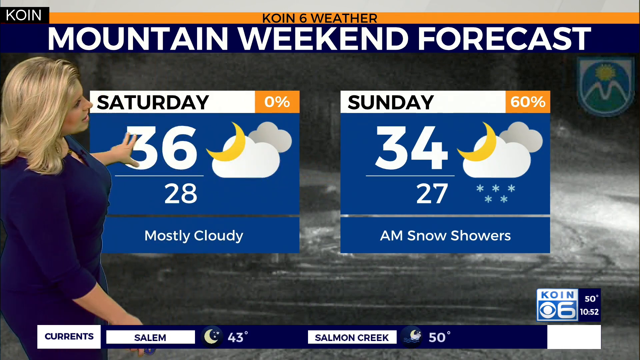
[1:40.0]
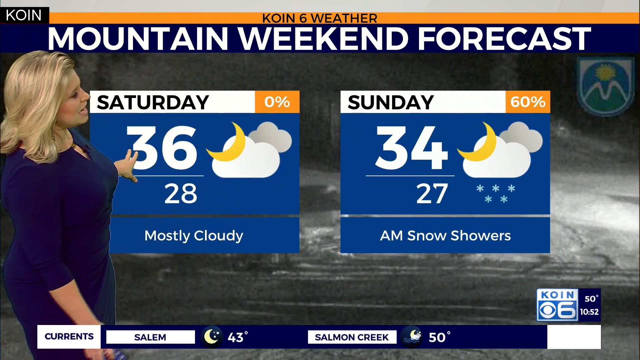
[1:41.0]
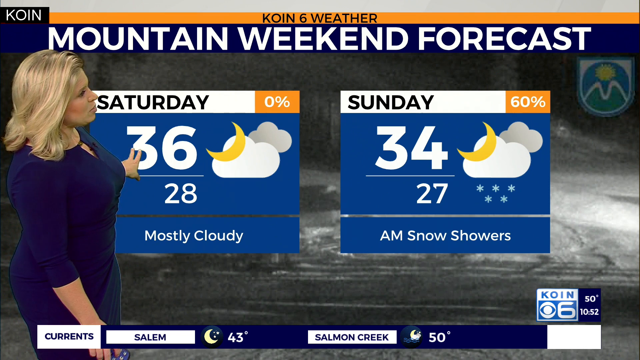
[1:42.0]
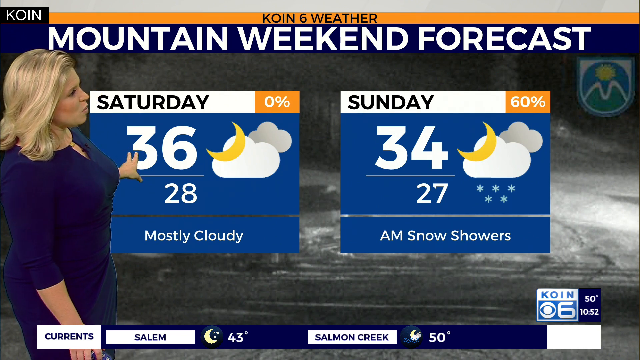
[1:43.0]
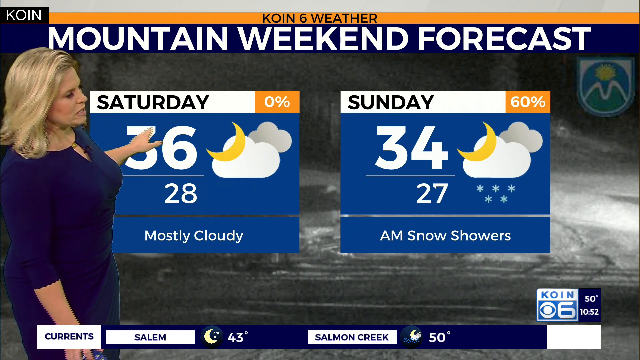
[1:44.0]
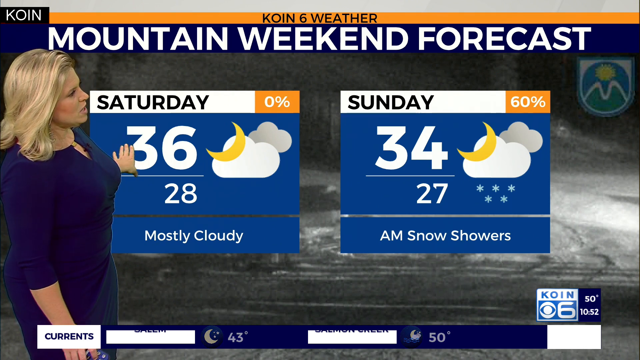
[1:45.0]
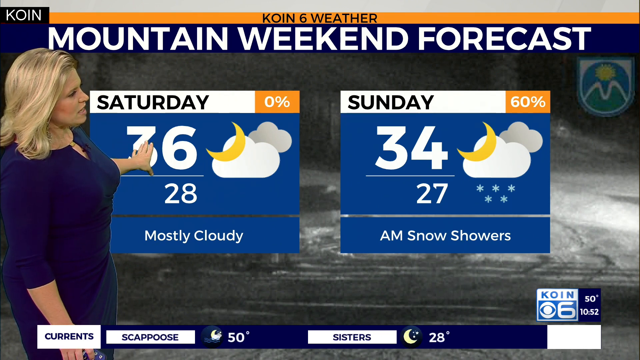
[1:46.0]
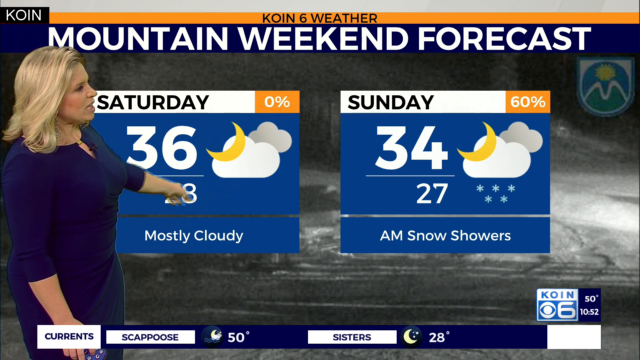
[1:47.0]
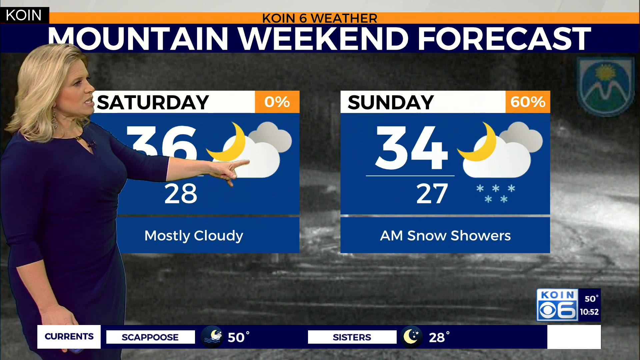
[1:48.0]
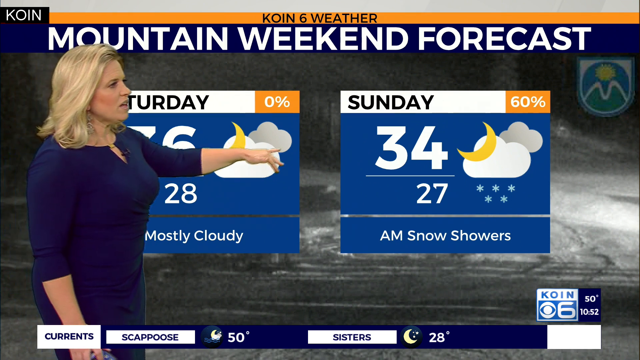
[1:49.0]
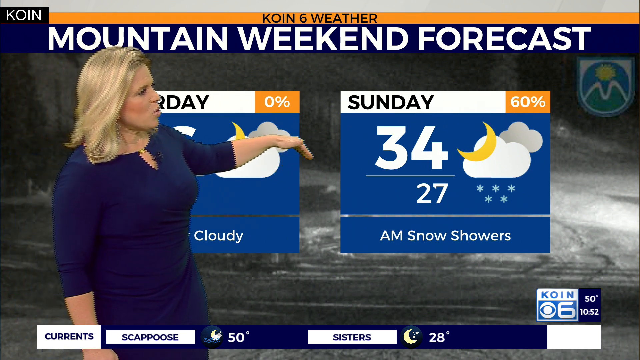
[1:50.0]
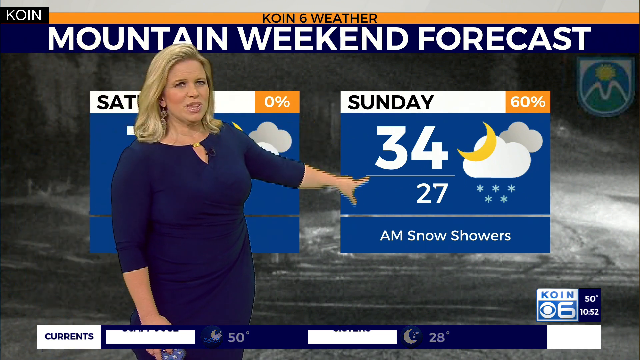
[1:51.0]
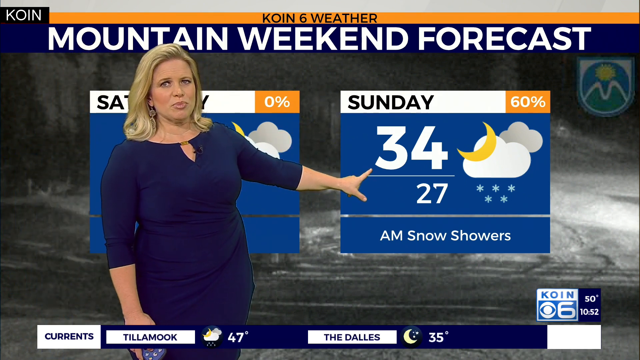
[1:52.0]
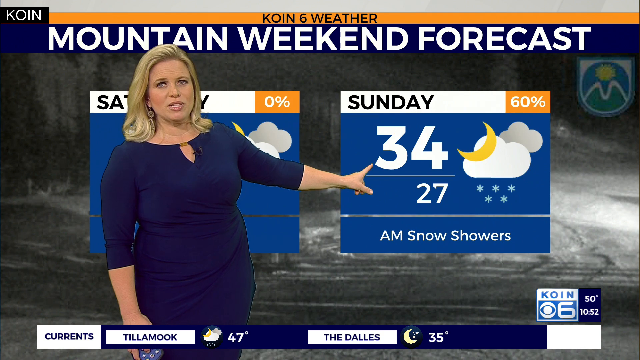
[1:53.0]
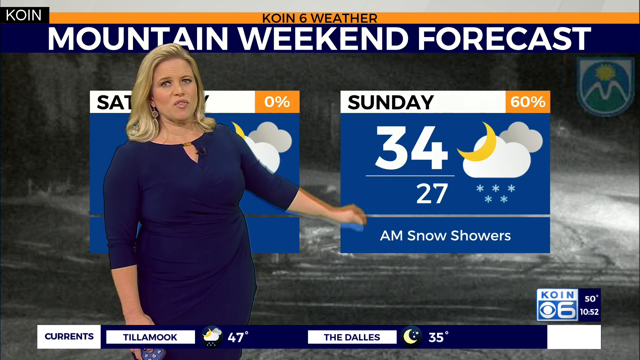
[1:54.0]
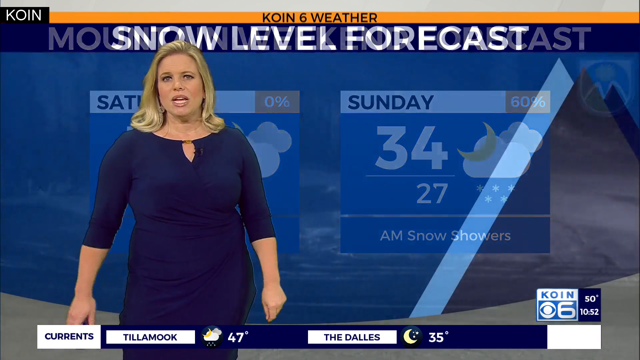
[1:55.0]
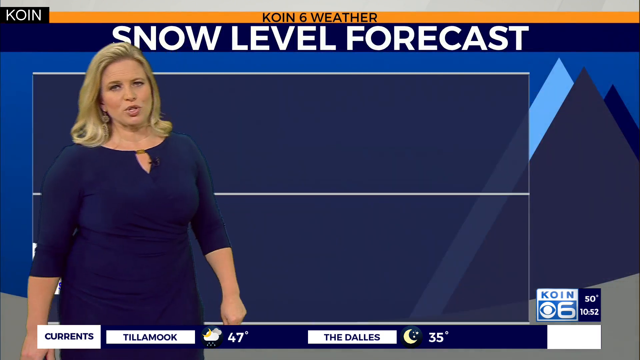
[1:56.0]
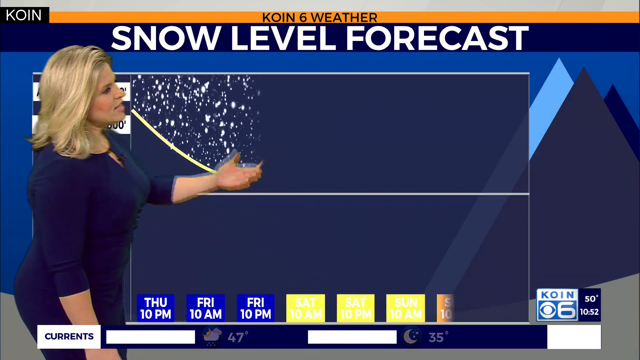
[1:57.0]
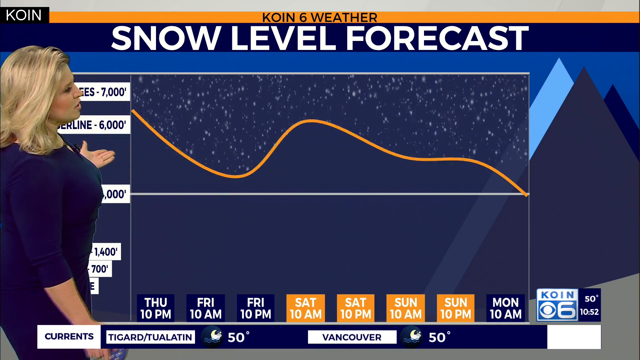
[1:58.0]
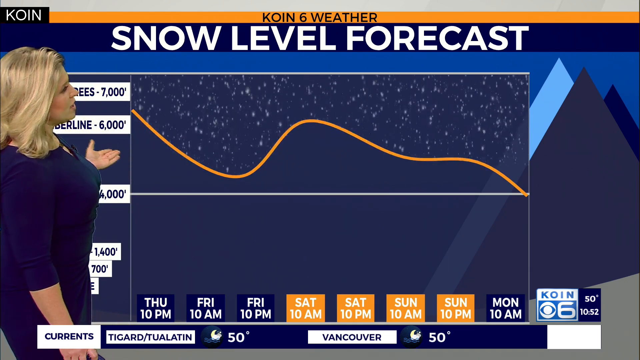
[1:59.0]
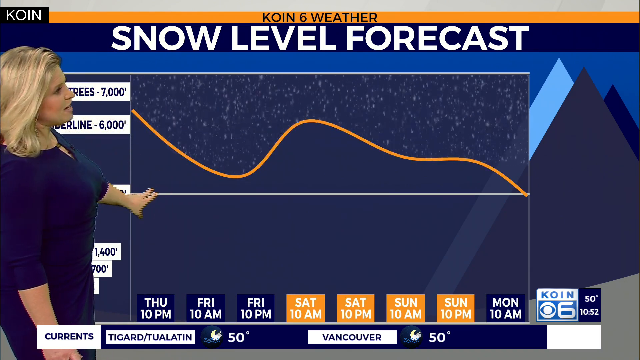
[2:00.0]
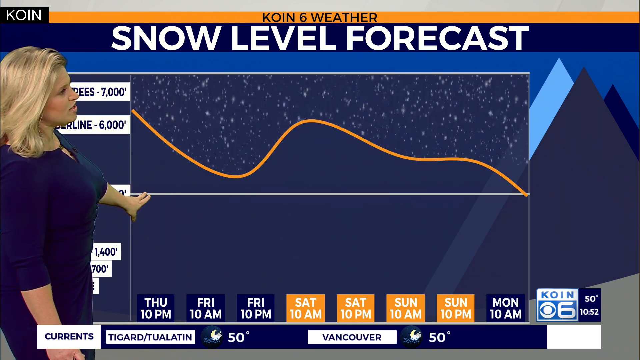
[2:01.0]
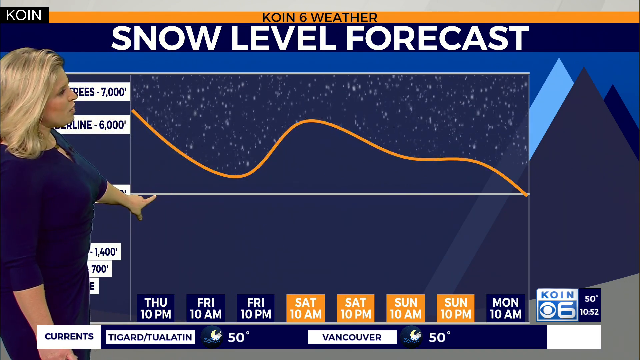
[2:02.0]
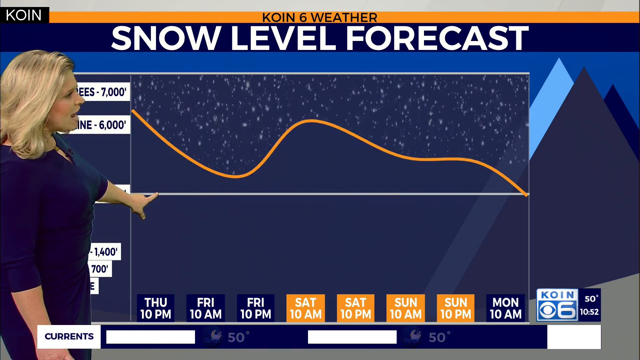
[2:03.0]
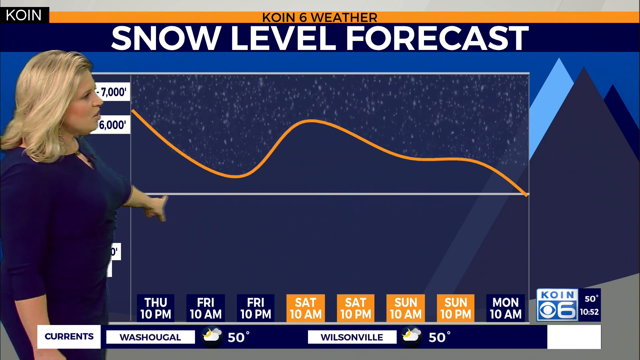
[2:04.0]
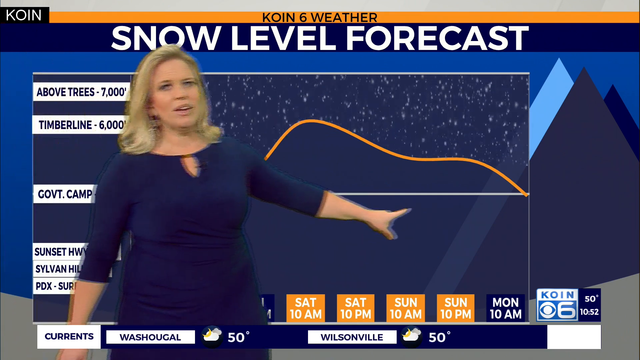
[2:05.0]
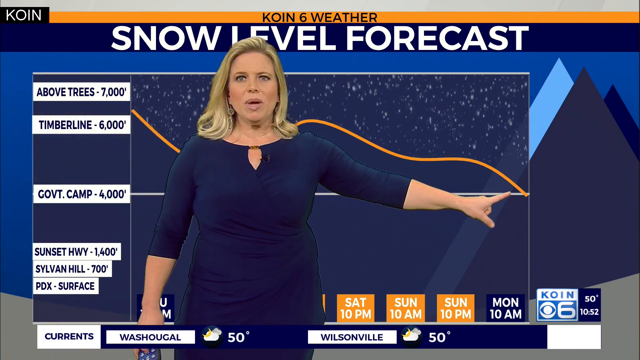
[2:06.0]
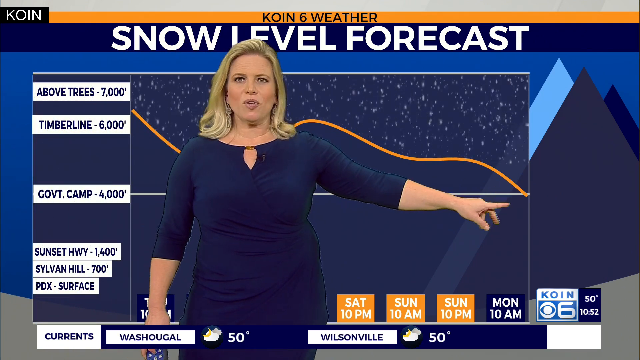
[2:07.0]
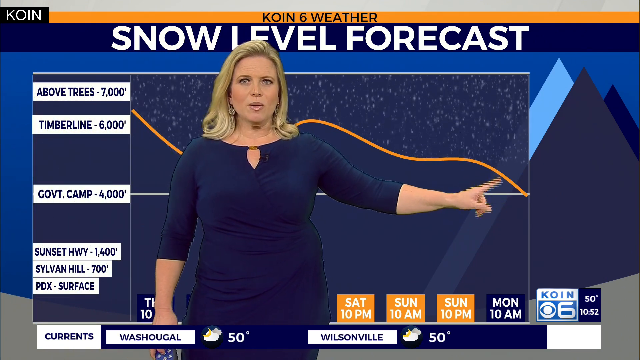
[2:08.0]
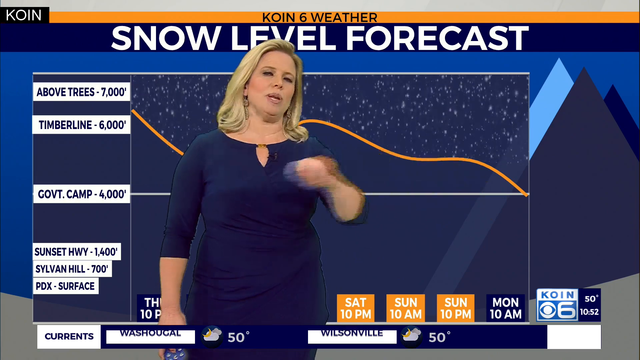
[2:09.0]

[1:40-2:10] A mountain weekend forecast appears: Saturday has a 0% chance of rain, a high of 36 degrees, a low of 28 degrees and is mostly cloudy; Sunday has a 60% chance of snow showers, a high of 34 degrees and a low of 27 degrees. She points to Saturday while looking forward, then points to the Sunday information on the screen. Next comes a snow level forecast, a chart of different days and times with snow falling at the top, along with other related snow information.